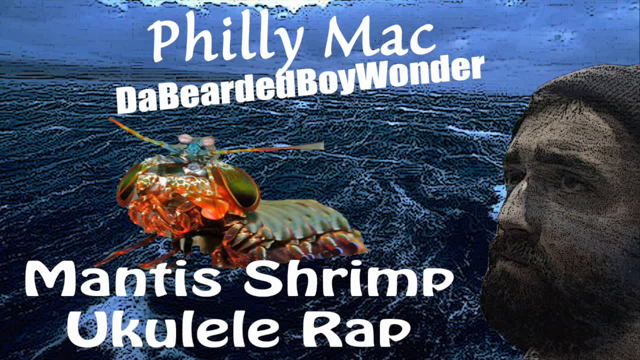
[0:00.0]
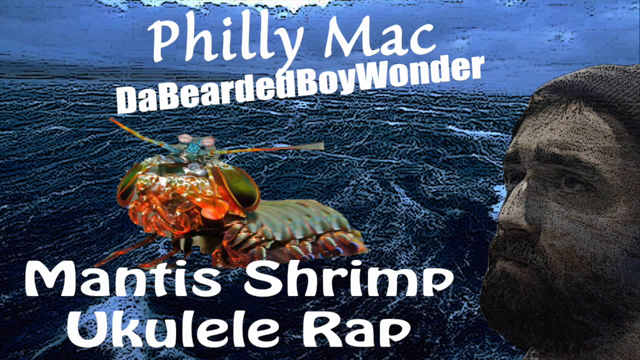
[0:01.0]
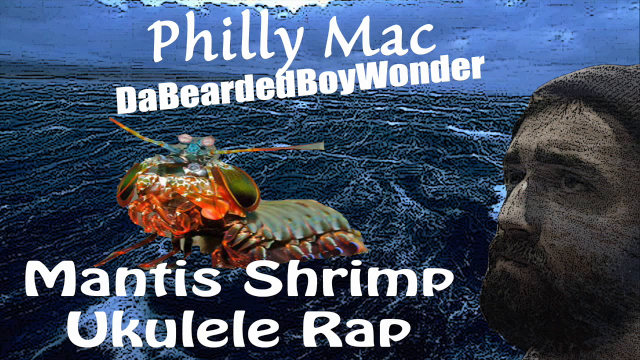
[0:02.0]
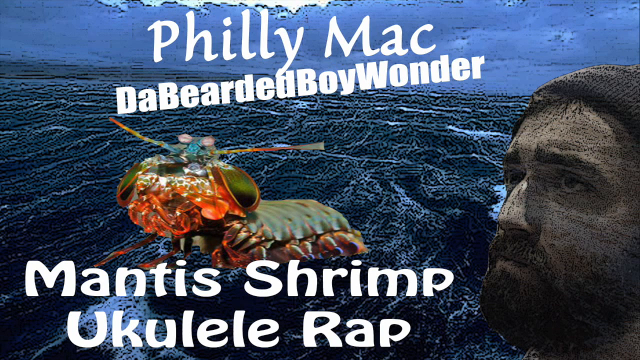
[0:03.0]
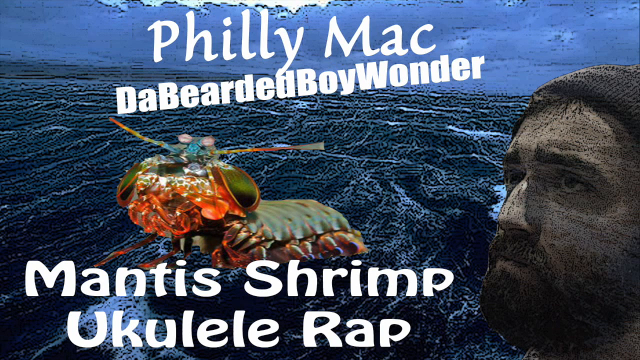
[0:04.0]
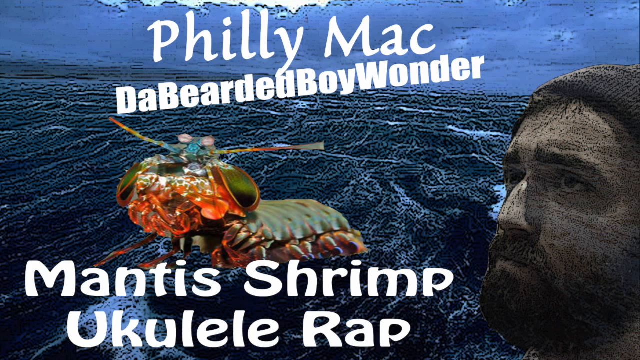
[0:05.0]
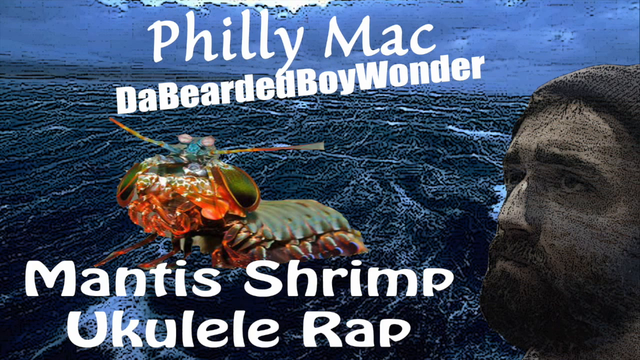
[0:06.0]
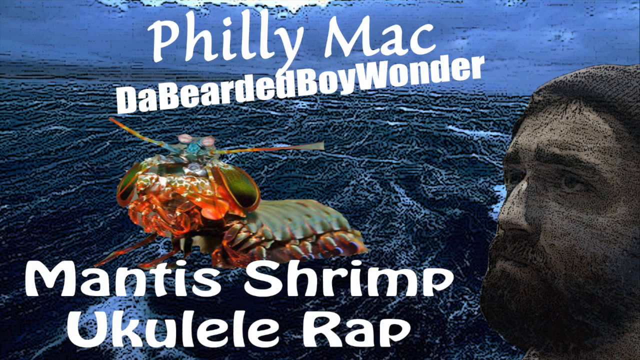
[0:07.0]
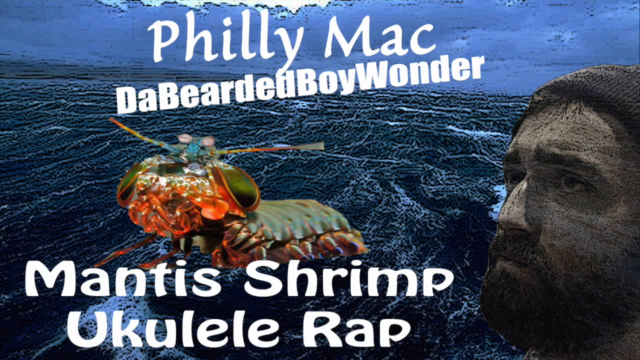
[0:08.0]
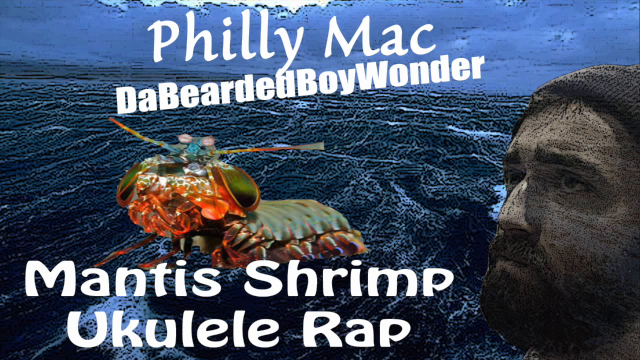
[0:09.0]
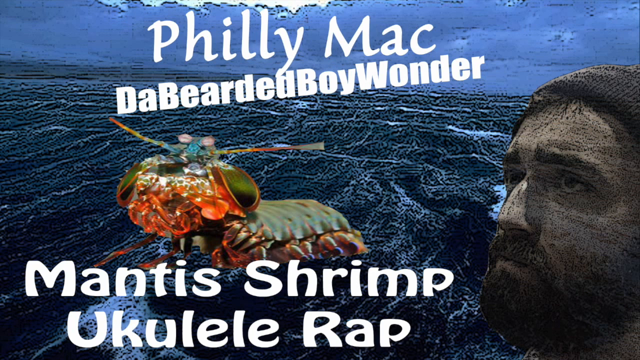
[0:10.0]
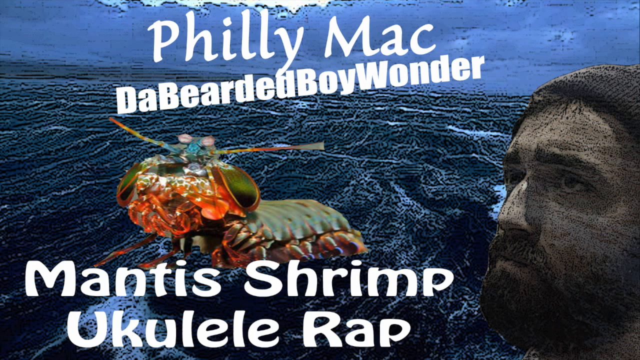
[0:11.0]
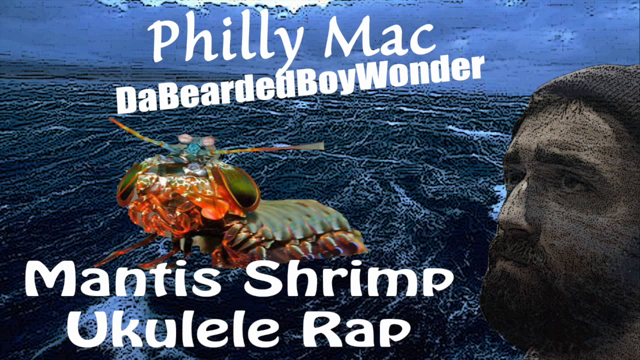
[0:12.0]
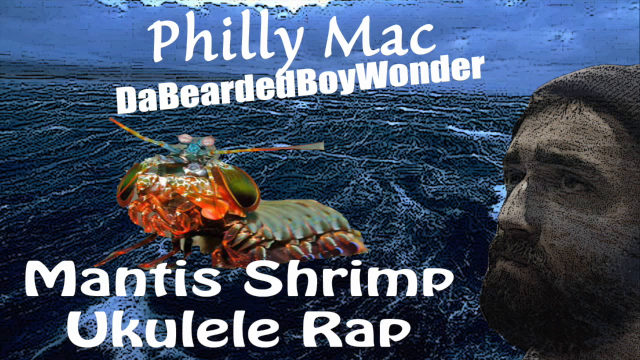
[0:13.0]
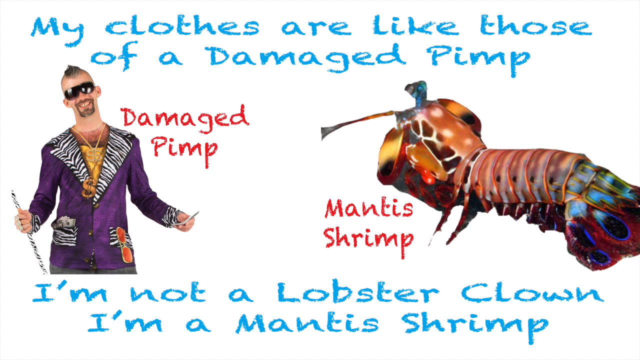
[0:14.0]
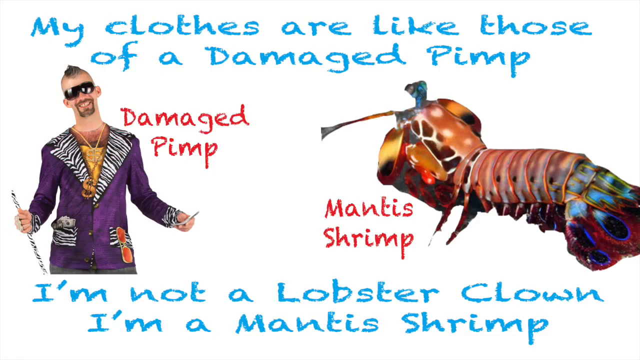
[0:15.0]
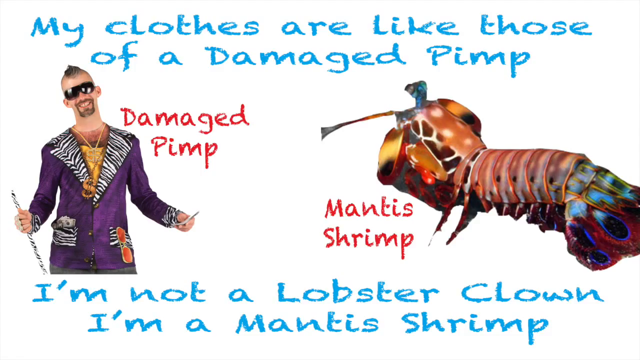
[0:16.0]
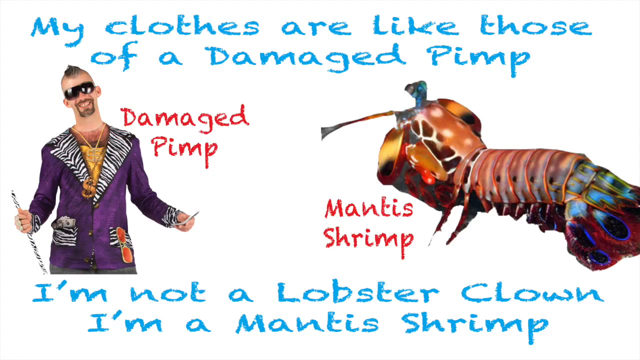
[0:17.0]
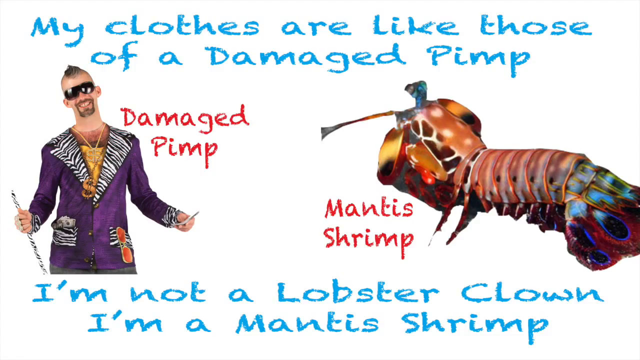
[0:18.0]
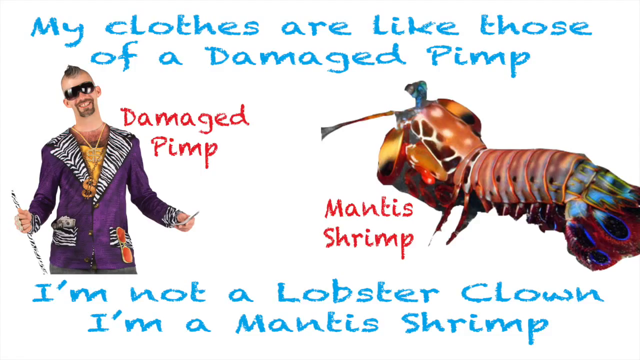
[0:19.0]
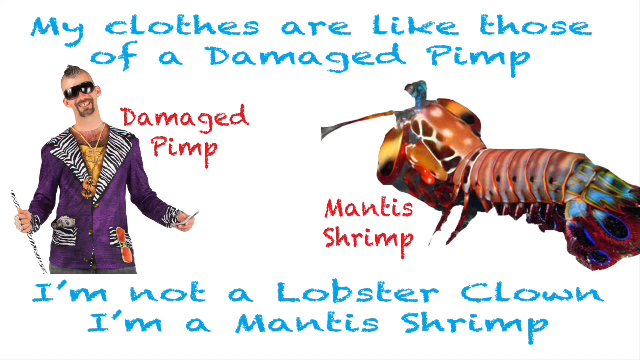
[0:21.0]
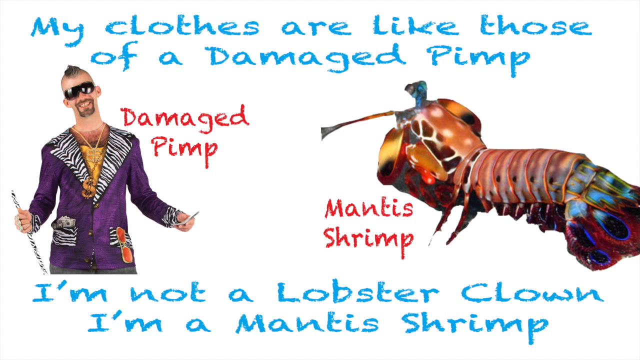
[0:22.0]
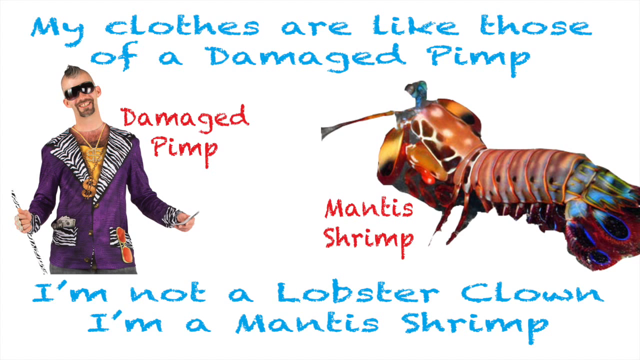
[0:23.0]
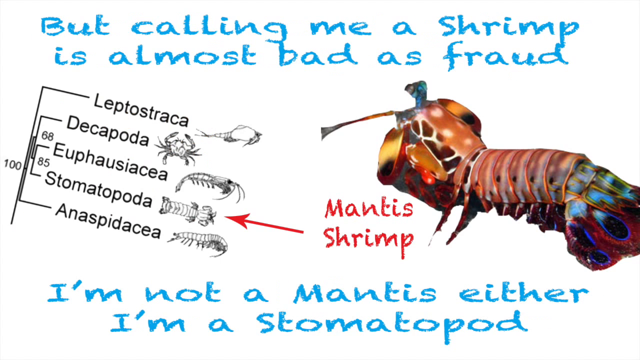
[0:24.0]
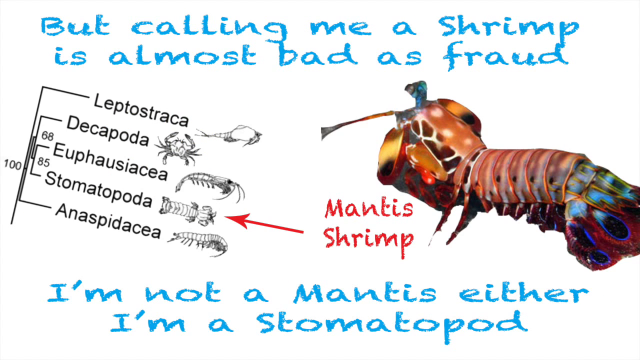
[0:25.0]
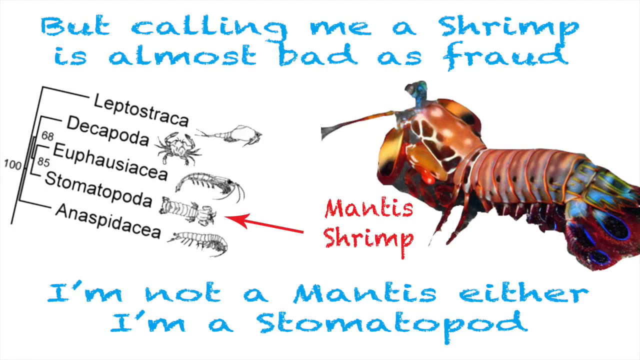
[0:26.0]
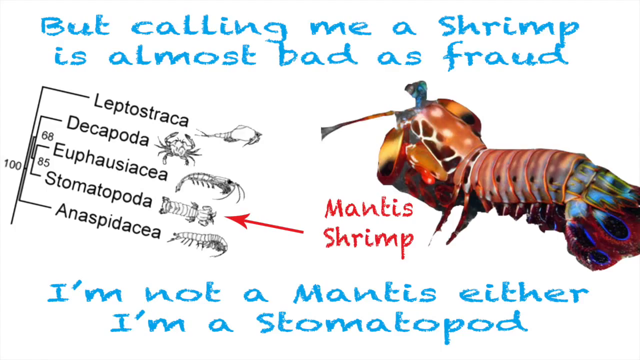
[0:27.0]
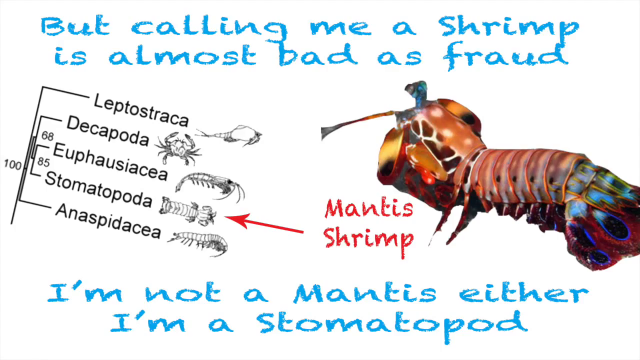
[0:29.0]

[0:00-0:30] The video opens on an image with the text "Philly mac, de-bearded boy wonder, mantis shrimp, and ukulele rap" and a picture of a guy who has a beard and wears a cap, kind of a winter cap. The next image shows a man wearing glasses with a short beard, labelled "damaged pimp", and next to him a mantis shrimp. The text on this image reads "my clothes are like those of a damaged pimp. I'm not a lobster clown. I'm a mantis shrimp." Another image then shows the mantis shrimp in different types and forms, with four different names.